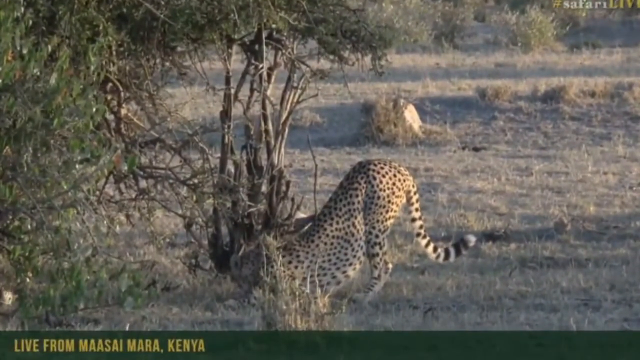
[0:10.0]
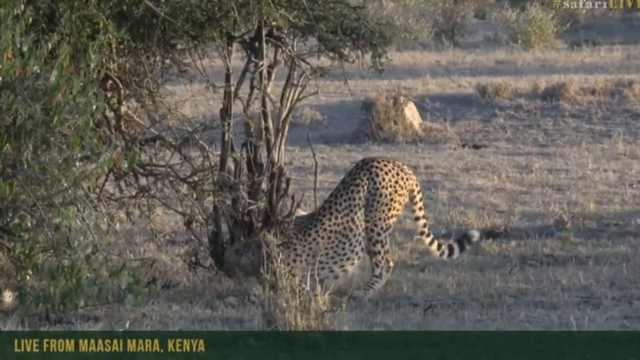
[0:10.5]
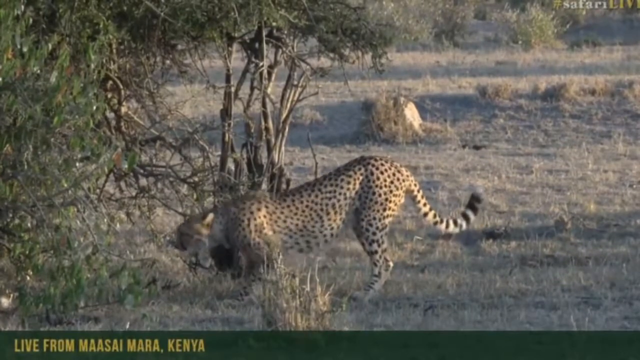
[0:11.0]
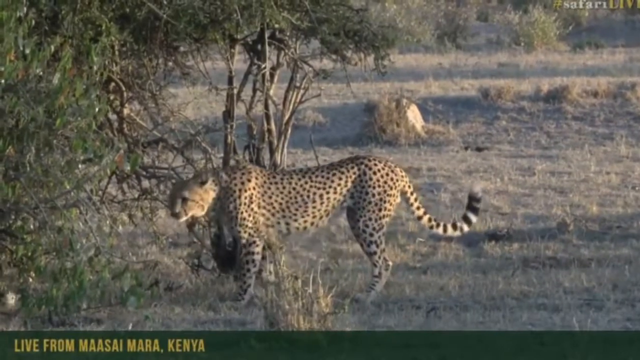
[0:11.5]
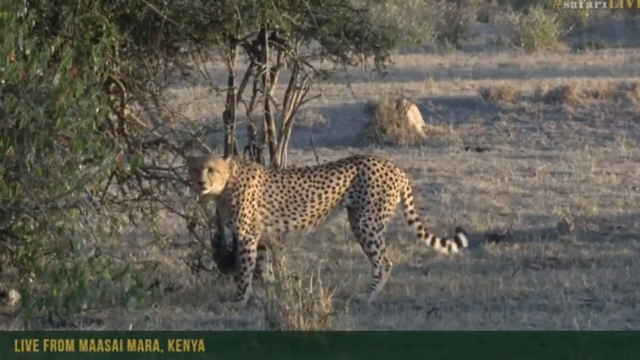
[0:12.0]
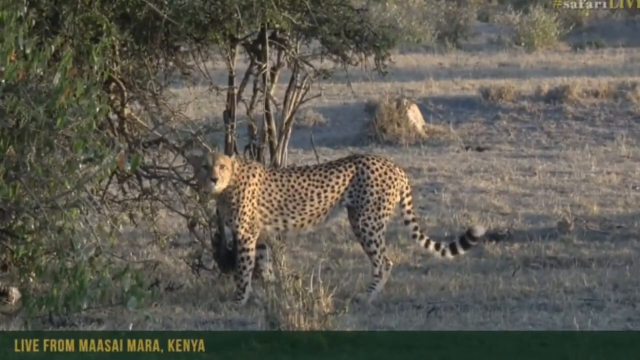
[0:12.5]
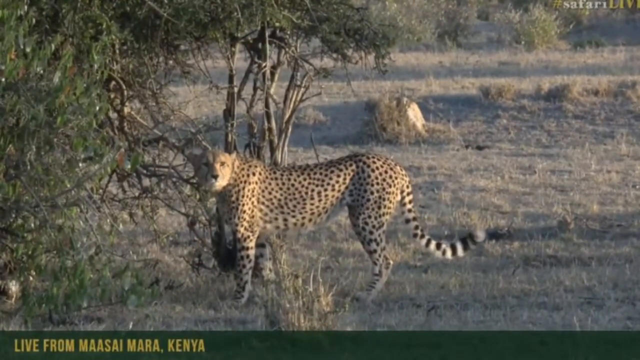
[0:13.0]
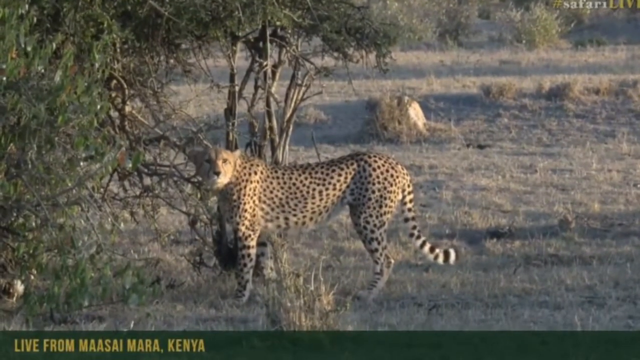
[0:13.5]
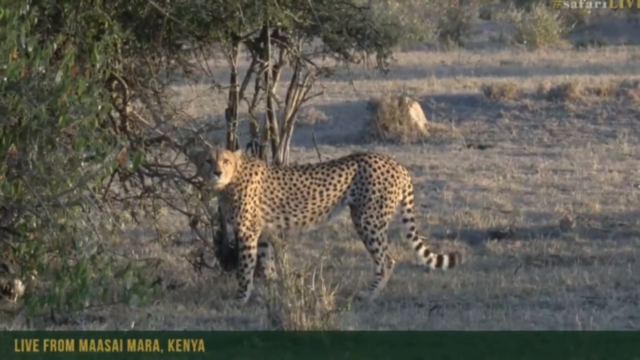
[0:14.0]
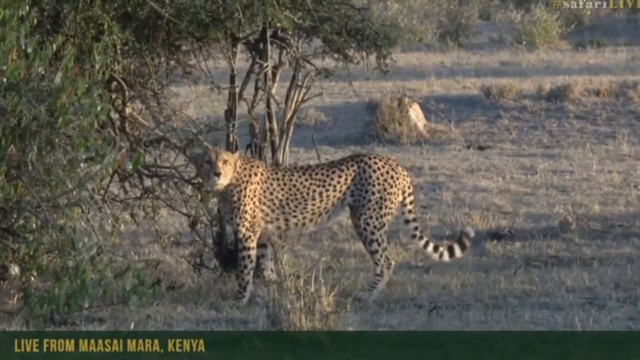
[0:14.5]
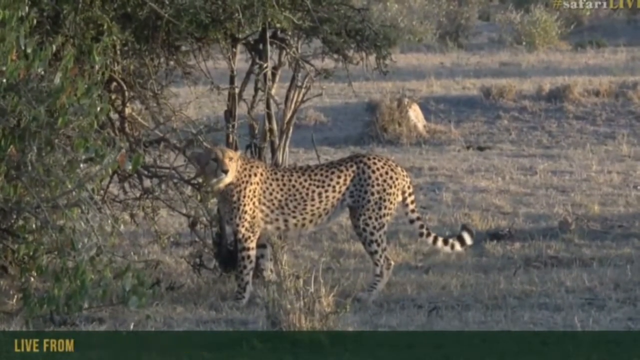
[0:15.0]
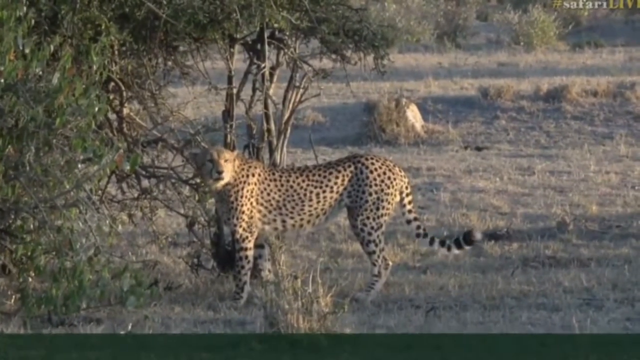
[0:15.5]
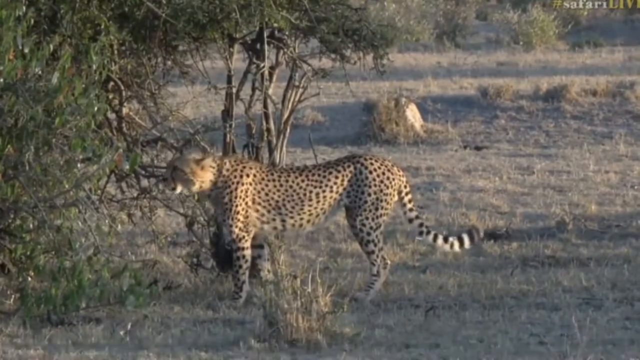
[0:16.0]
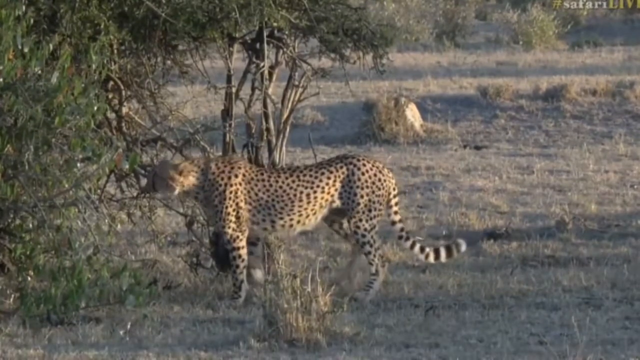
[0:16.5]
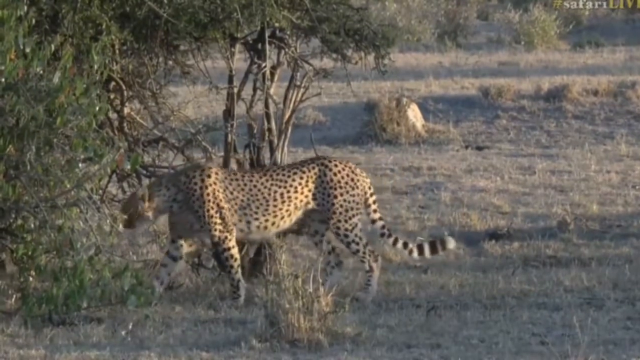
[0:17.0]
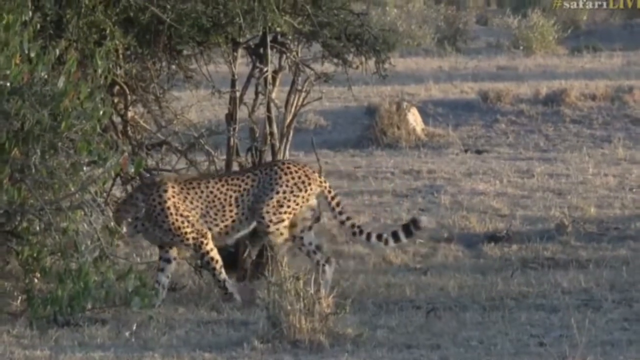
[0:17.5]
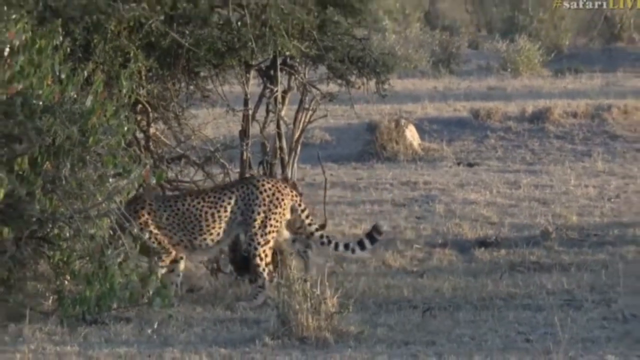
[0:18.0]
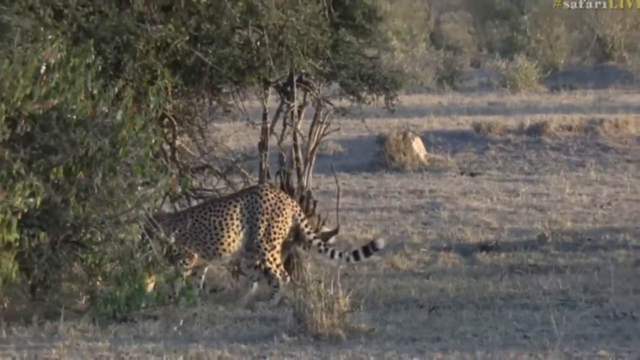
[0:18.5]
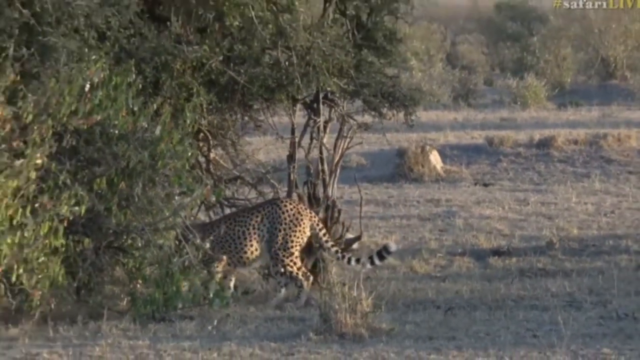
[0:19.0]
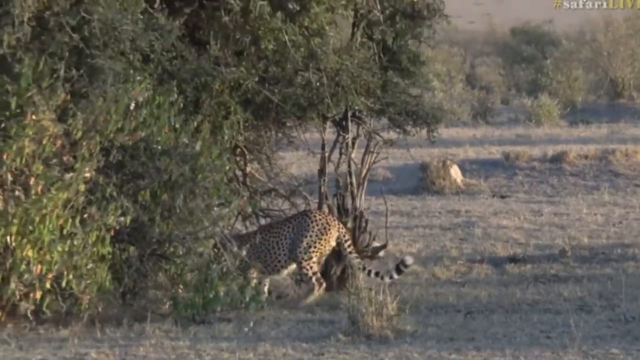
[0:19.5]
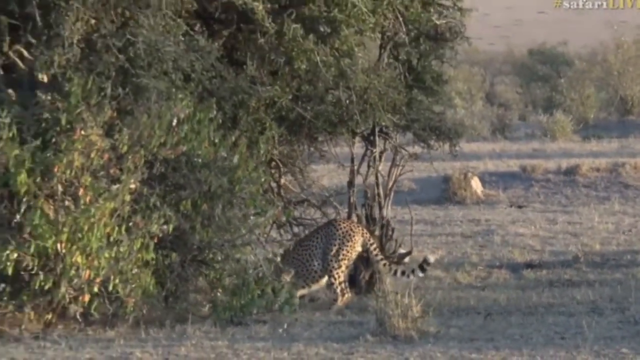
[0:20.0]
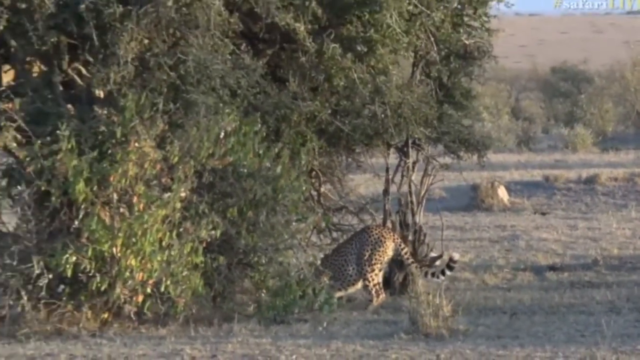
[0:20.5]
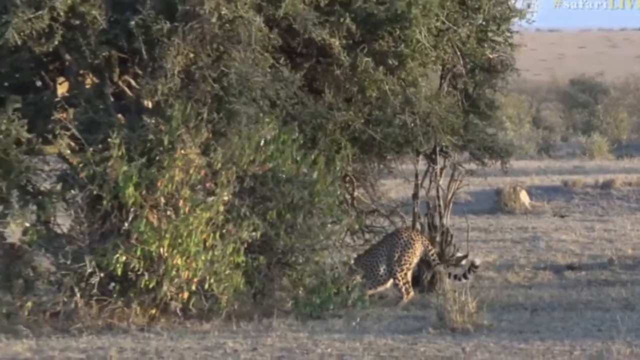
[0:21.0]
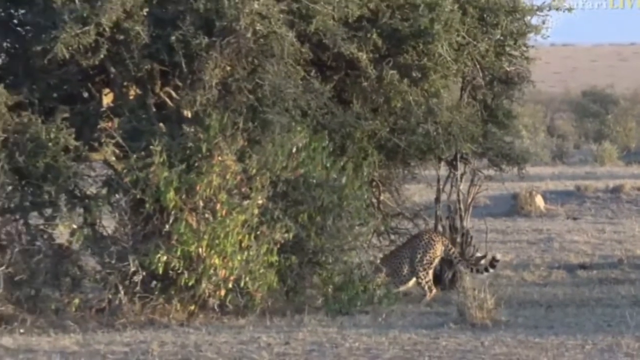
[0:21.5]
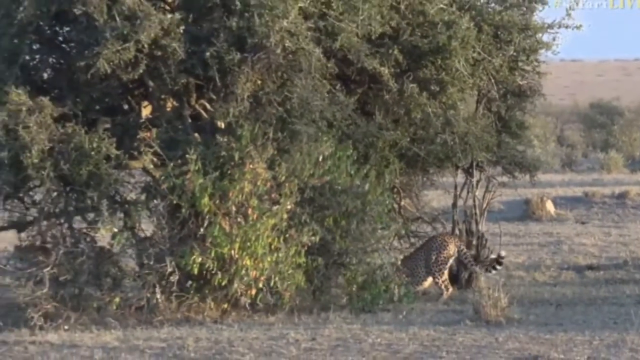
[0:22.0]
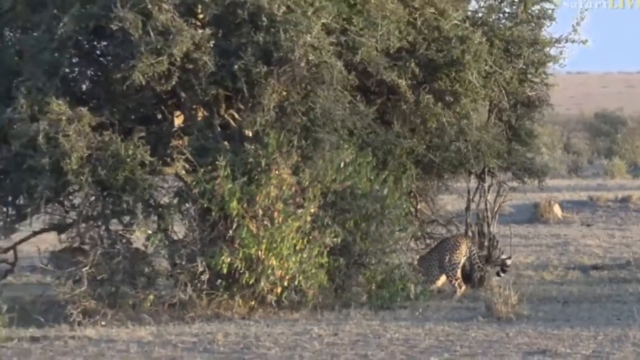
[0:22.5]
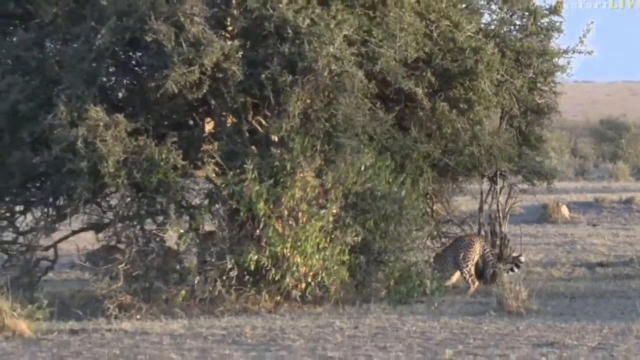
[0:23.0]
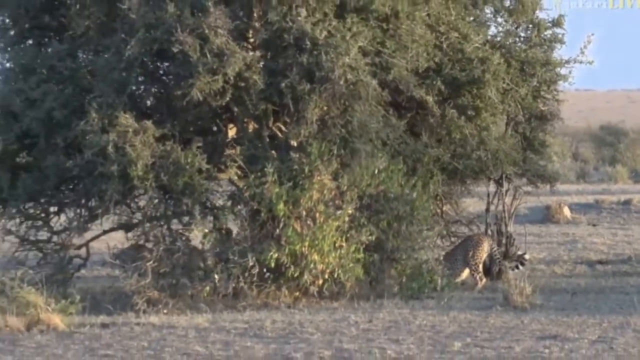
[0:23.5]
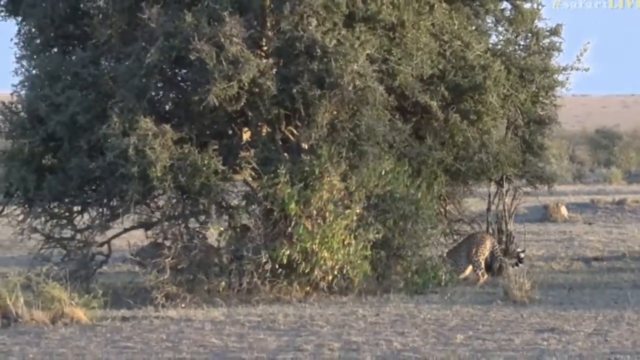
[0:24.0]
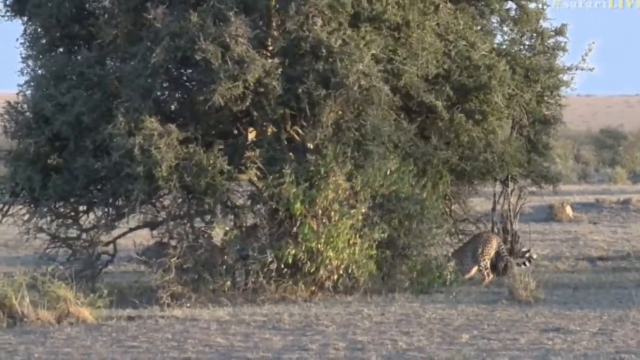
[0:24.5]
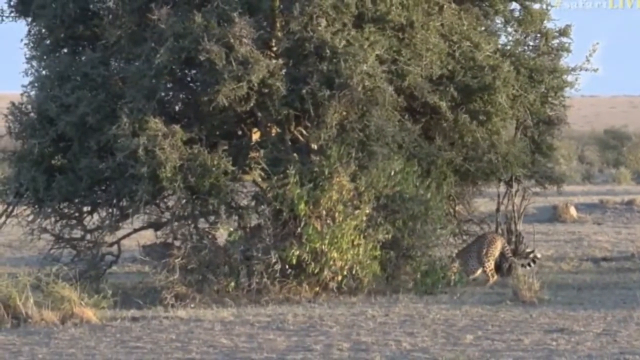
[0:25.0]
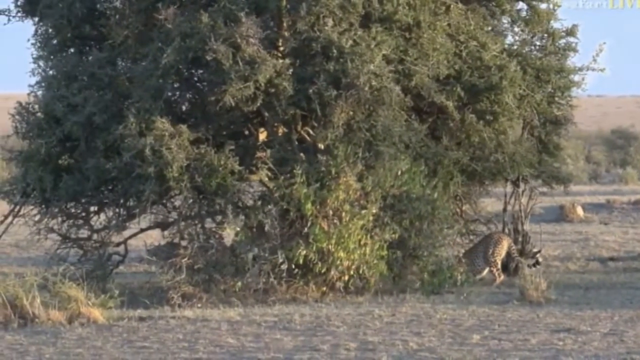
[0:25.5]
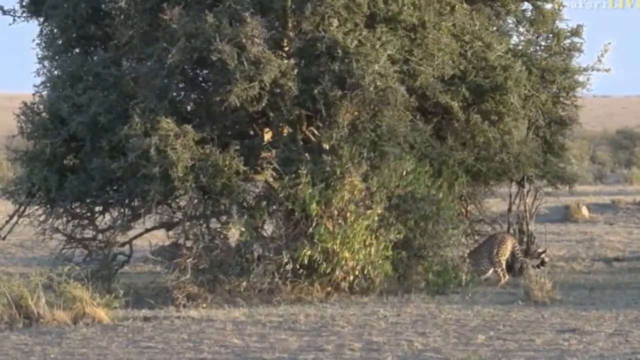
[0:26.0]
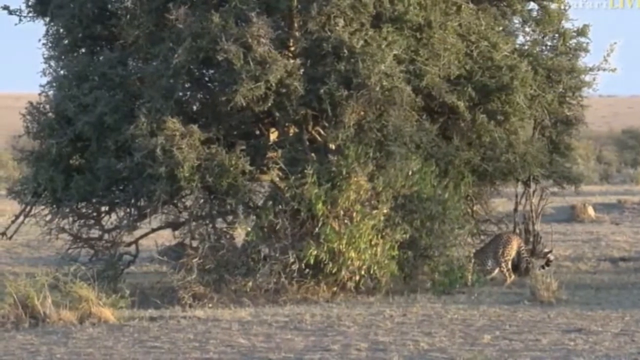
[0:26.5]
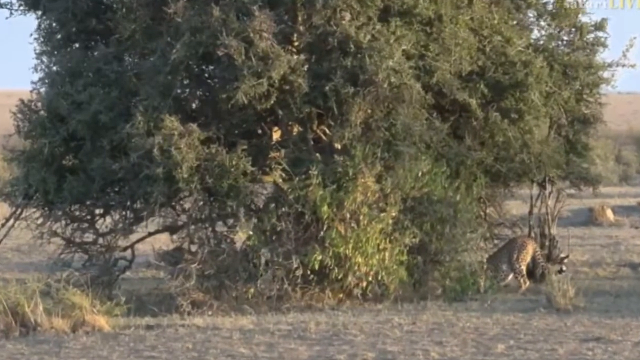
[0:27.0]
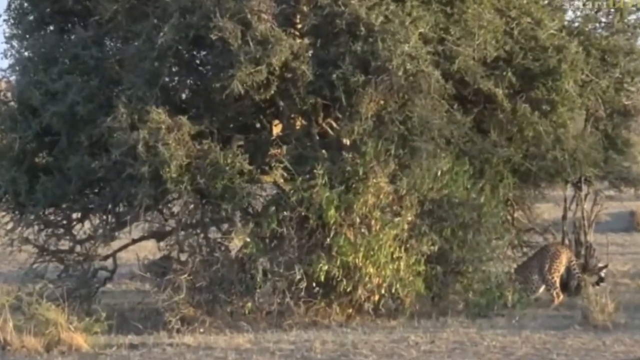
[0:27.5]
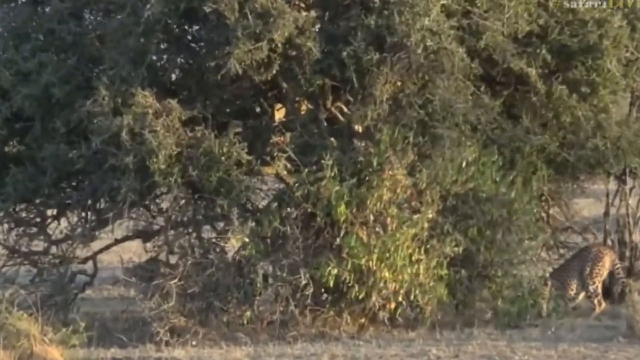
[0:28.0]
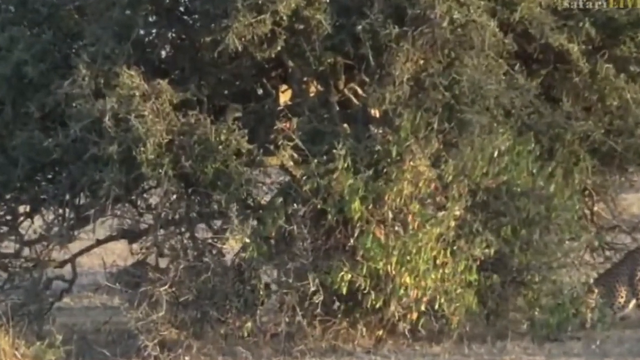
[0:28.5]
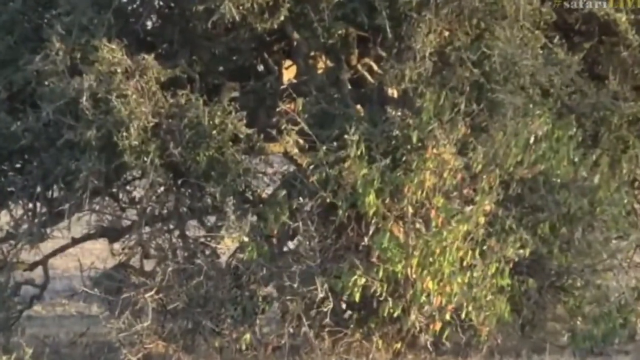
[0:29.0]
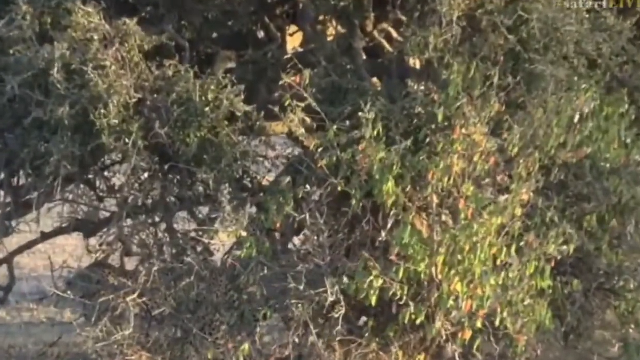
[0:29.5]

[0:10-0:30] The camera zooms in and focuses on a cheetah, which looks like it is concentrating on something and struggling with something on the ground. It stops, looks toward the camera, then focuses back, bends down and starts struggling with something again. The camera then focuses on the bush, where a number of animals, apparently also cheetahs, are relaxing. As the camera zooms into the bush, more animals become visible, too many to count easily. One cheetah outside the bush seems to be struggling with something, and the camera focuses closely on it.